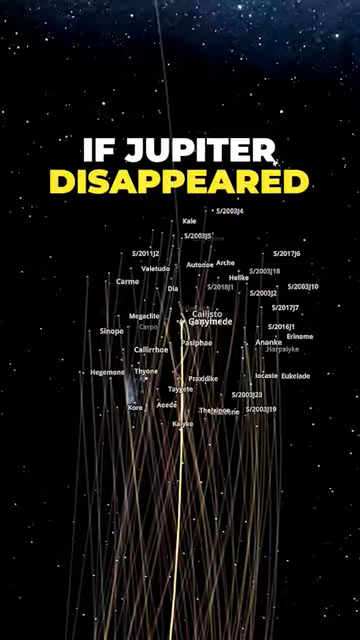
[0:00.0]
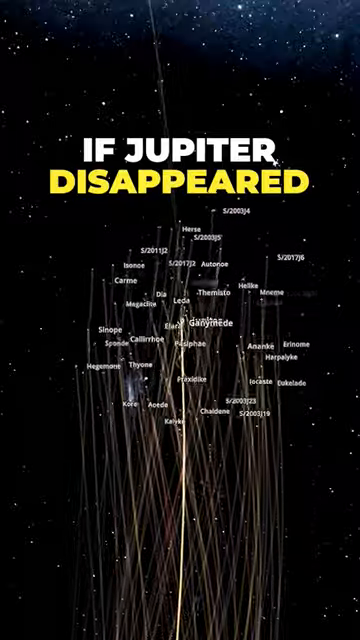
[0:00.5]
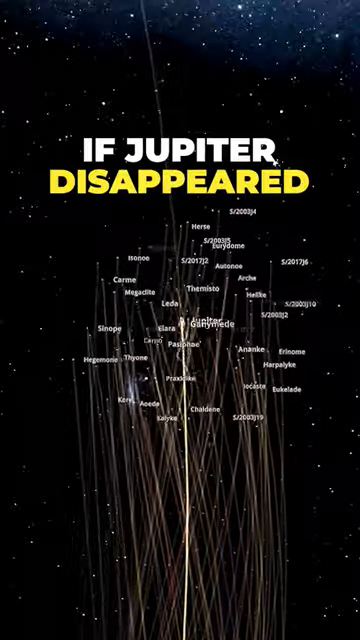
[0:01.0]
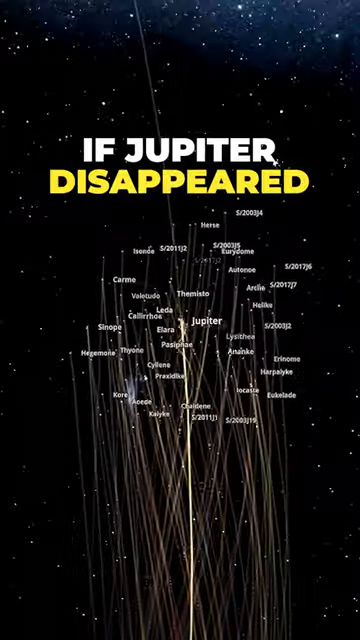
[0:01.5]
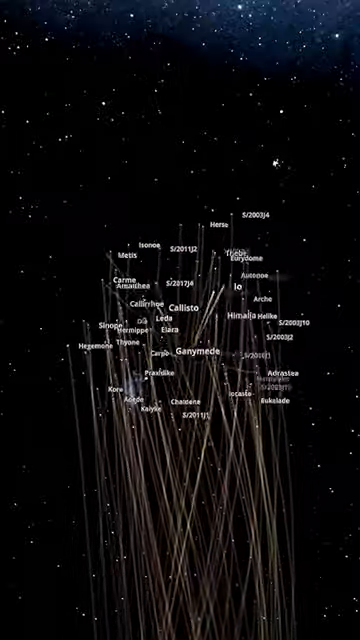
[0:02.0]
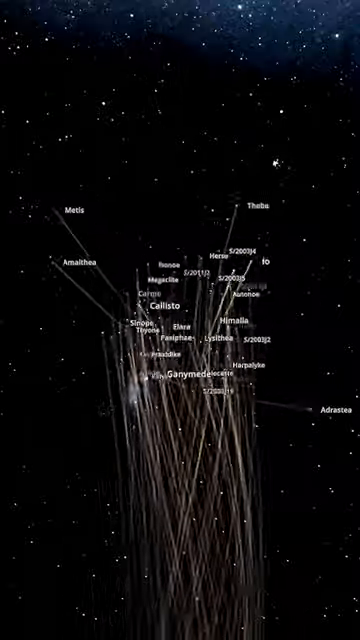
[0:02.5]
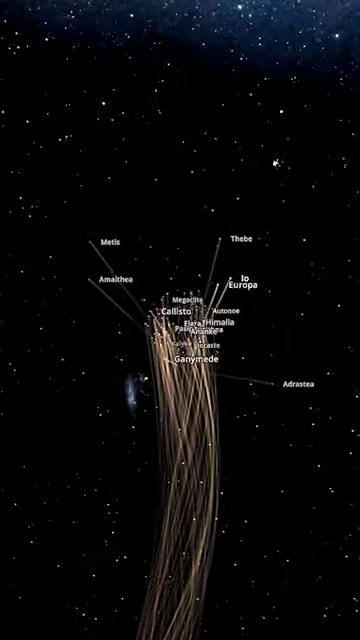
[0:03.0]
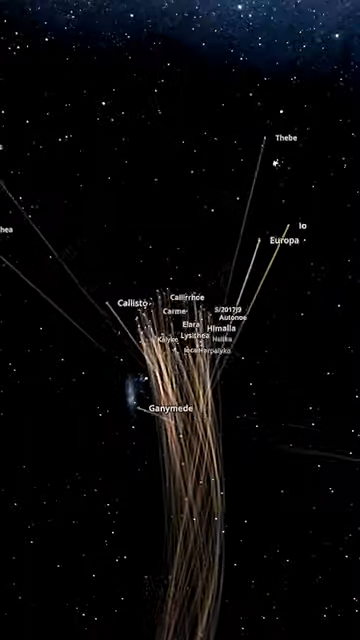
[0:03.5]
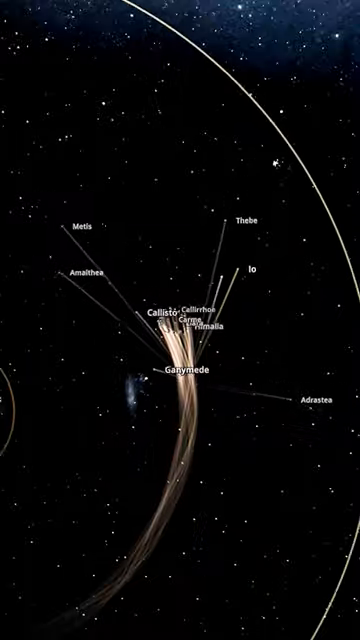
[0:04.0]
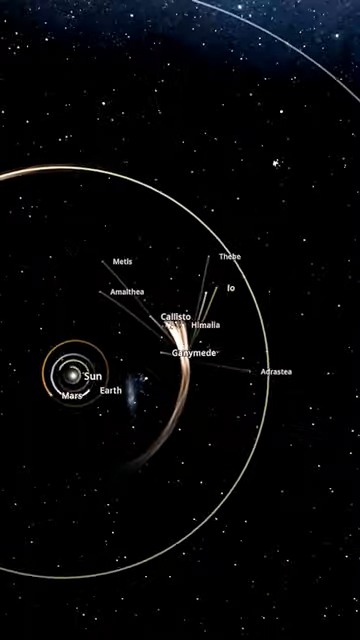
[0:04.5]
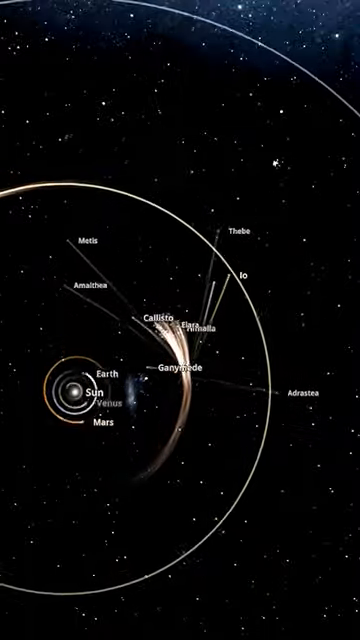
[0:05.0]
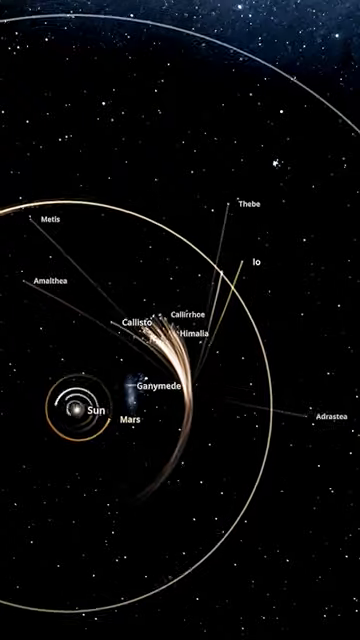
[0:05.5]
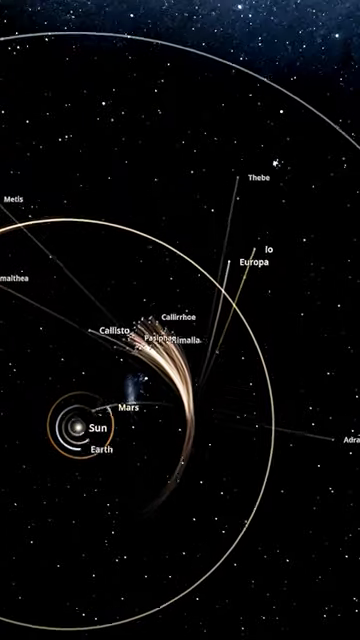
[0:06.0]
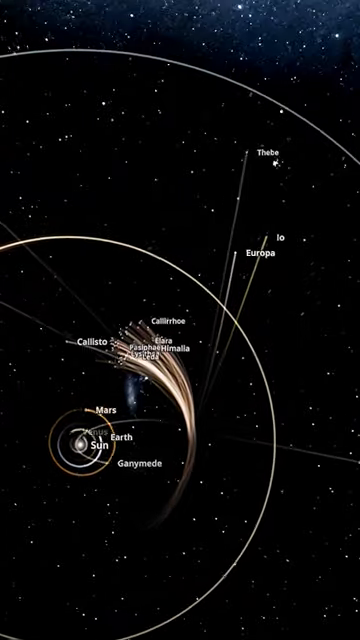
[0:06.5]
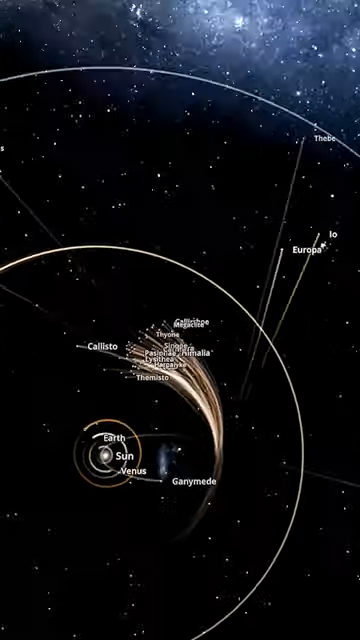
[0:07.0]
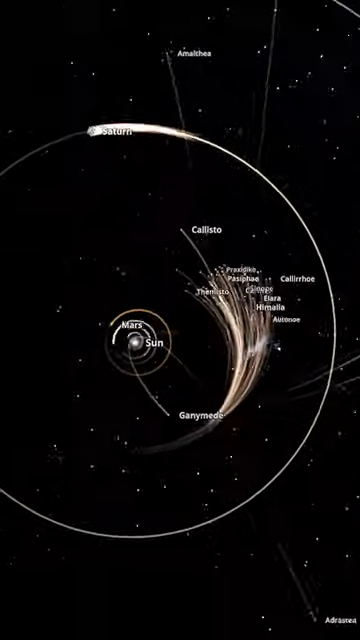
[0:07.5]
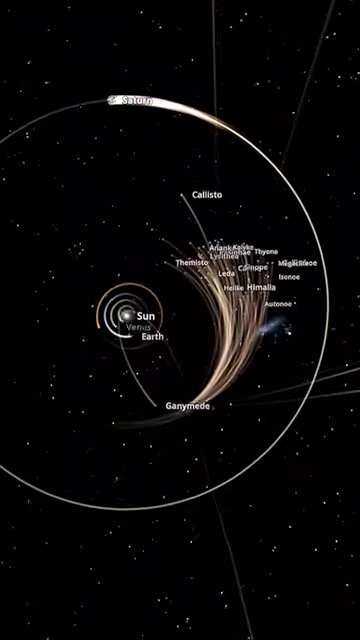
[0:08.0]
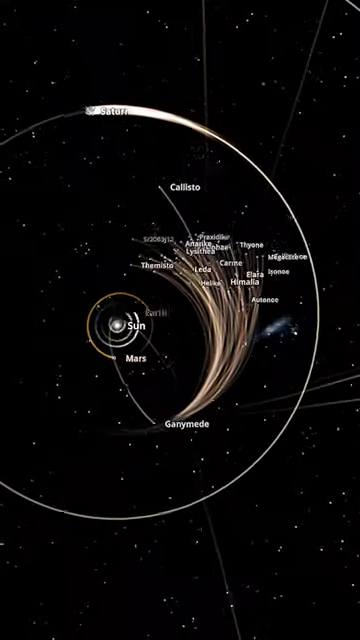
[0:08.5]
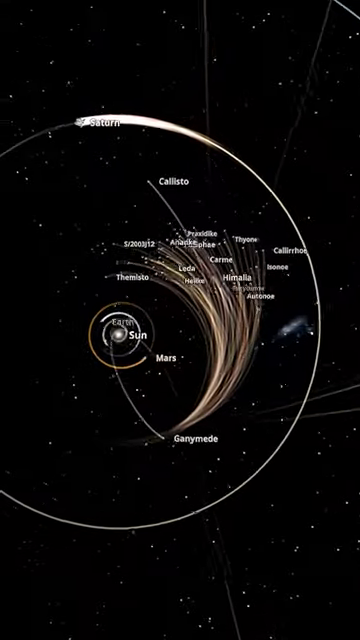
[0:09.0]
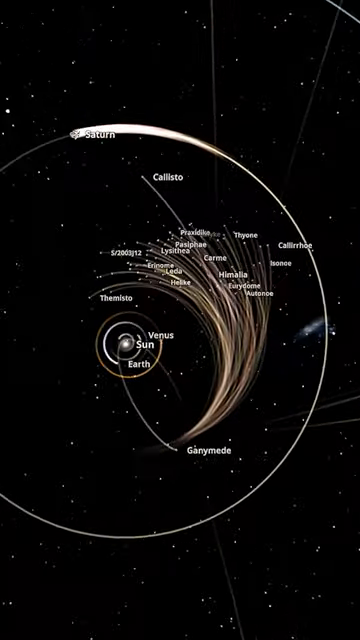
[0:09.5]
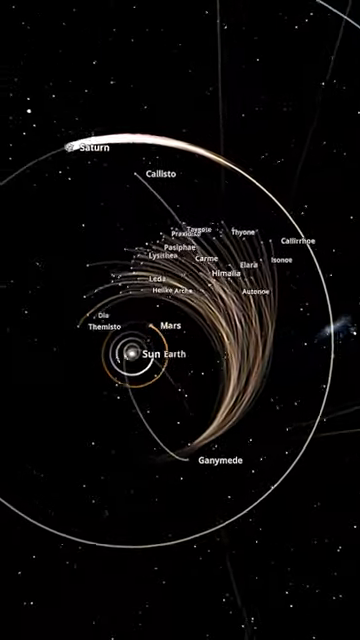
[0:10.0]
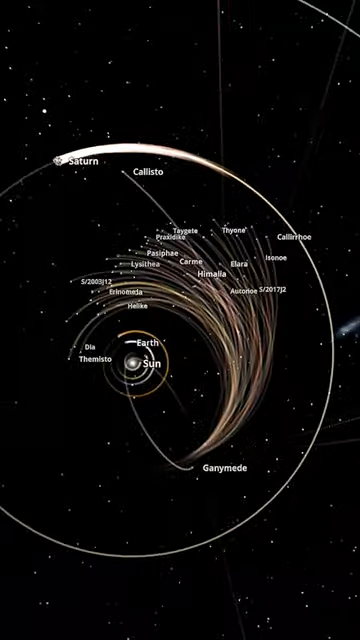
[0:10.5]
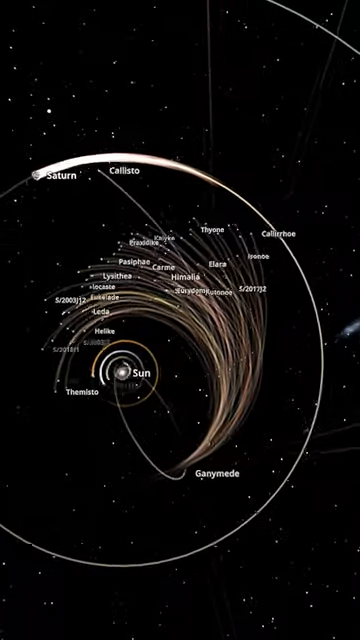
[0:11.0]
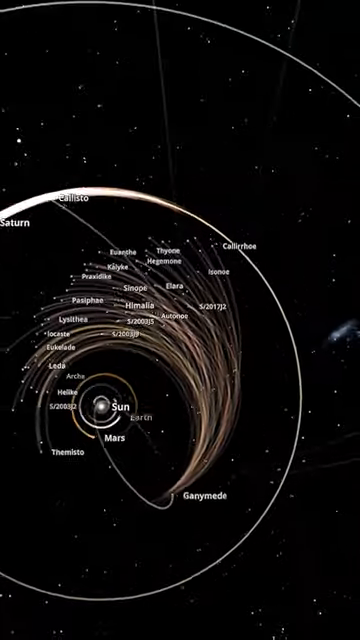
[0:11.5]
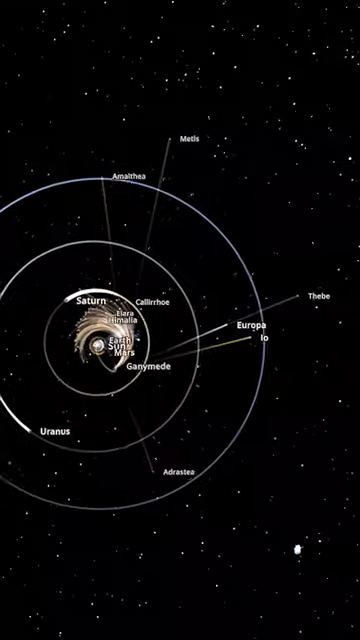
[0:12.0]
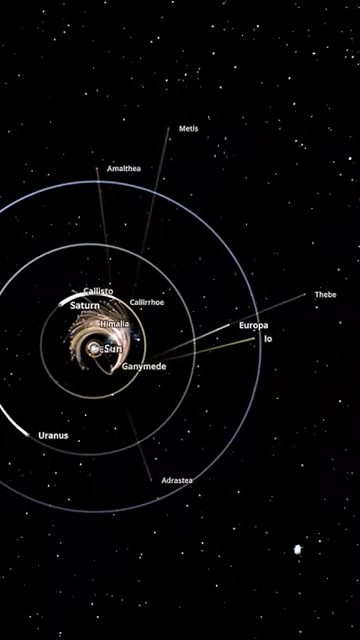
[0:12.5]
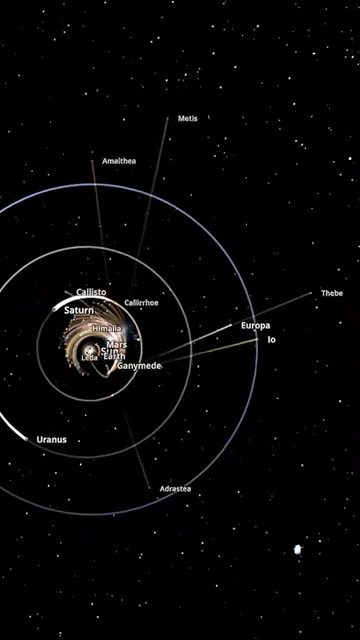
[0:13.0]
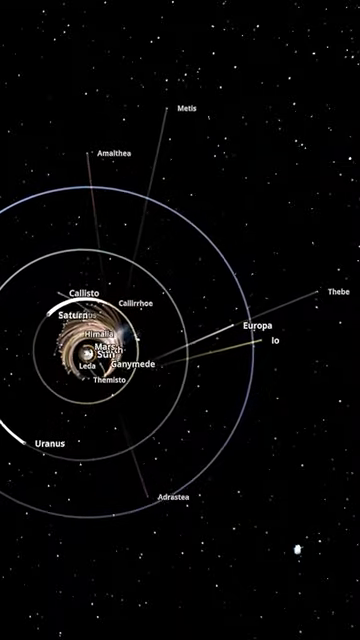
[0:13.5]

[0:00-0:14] The video, titled "if Jupiter disappeared," starts with planets swirling around the solar system in a small diagram. On-screen text then mentions something about Jupiter disappearing, and many small lines appear up in the air, flickering like stars. The text is hard to read, but the other planets are seen spinning, and then the screen says "if Jupiter disappeared." The Sun is at the center, and the Earth, the moon and some of the other planets are visible. Things seem to go veering off into the distance, possibly planets zooming off through the solar system.